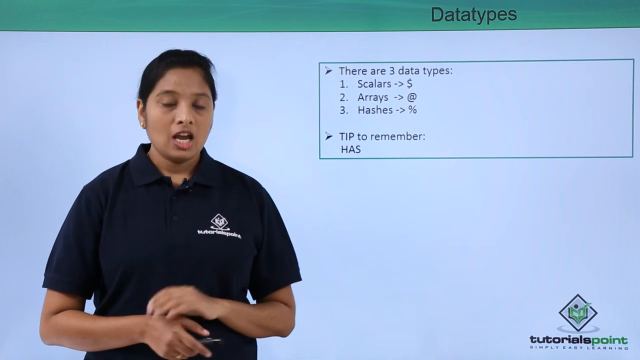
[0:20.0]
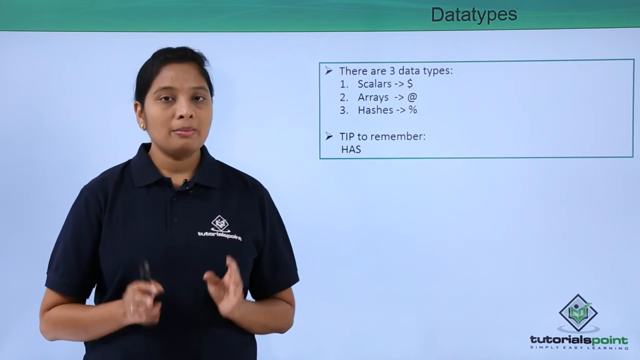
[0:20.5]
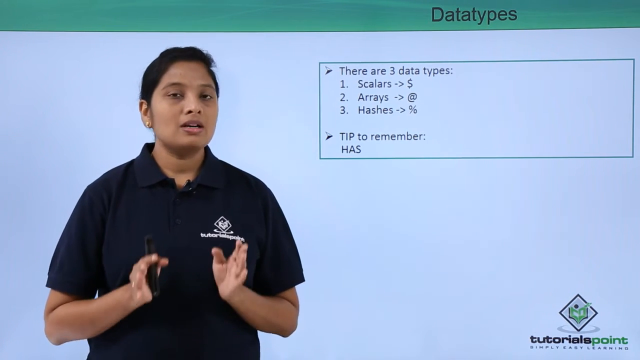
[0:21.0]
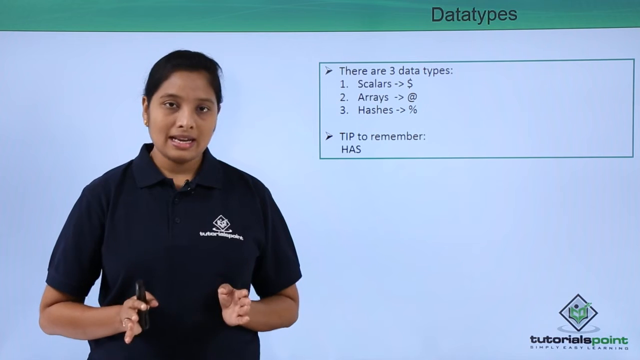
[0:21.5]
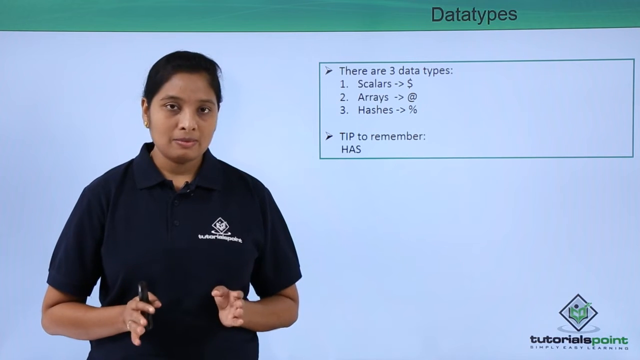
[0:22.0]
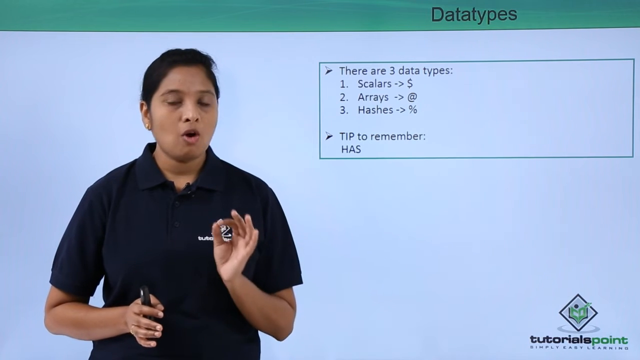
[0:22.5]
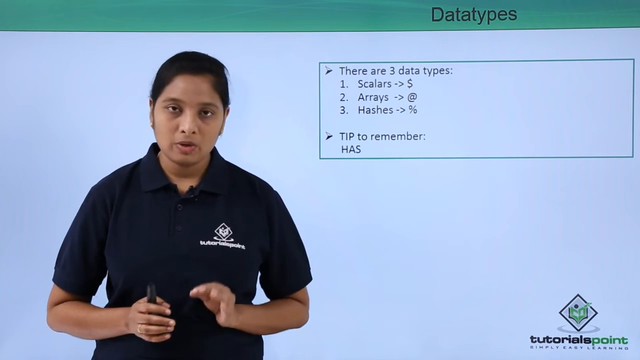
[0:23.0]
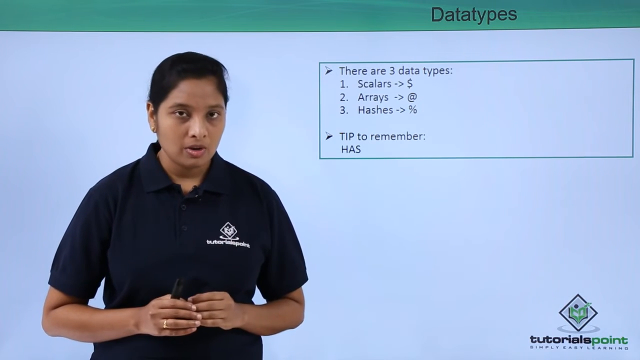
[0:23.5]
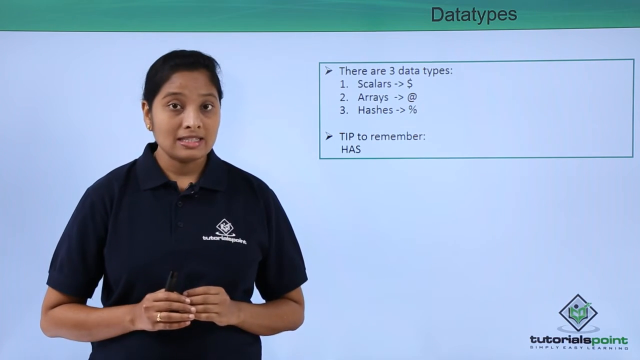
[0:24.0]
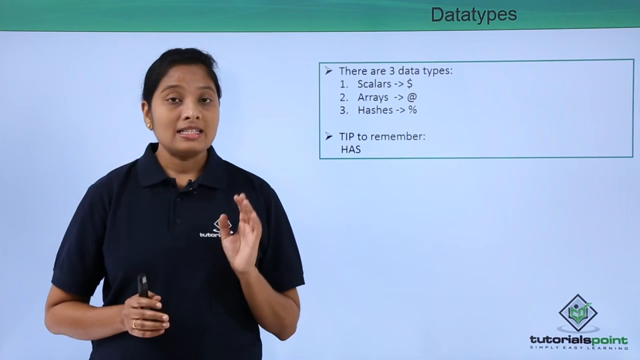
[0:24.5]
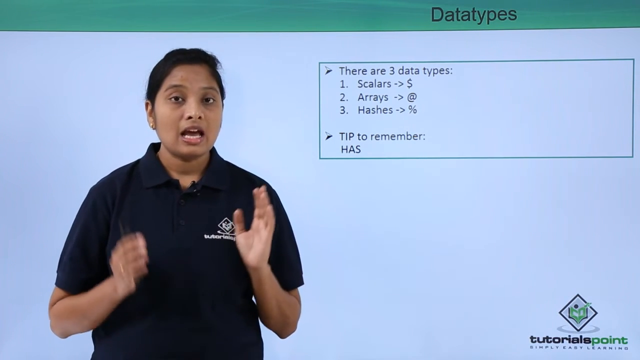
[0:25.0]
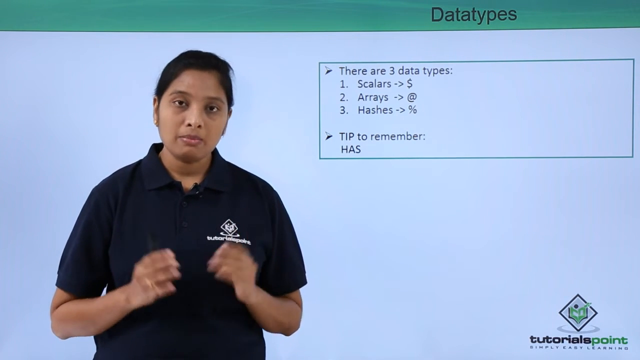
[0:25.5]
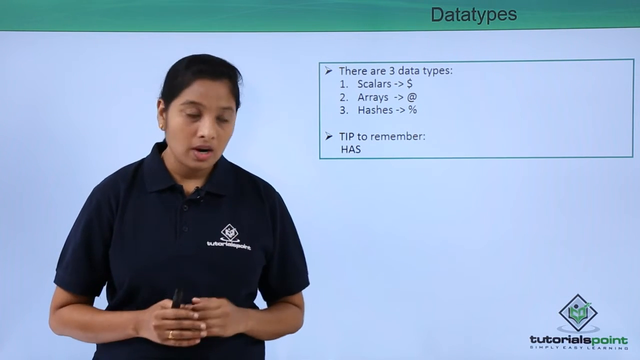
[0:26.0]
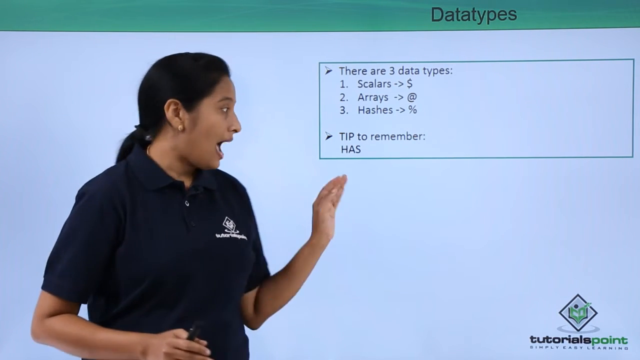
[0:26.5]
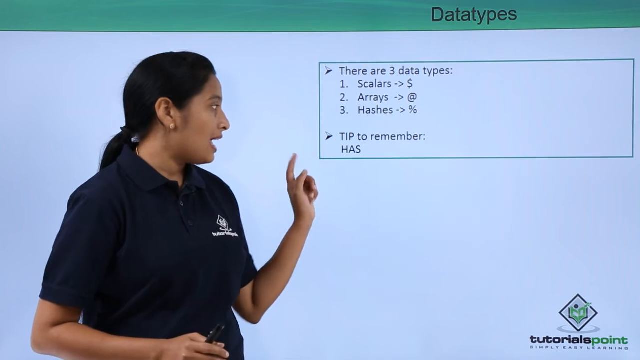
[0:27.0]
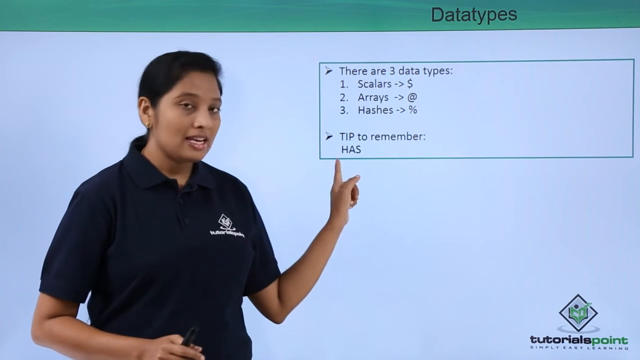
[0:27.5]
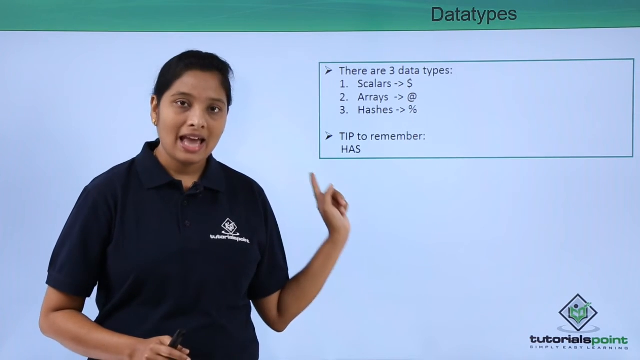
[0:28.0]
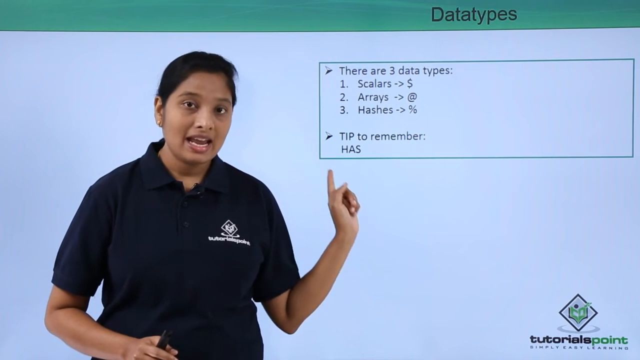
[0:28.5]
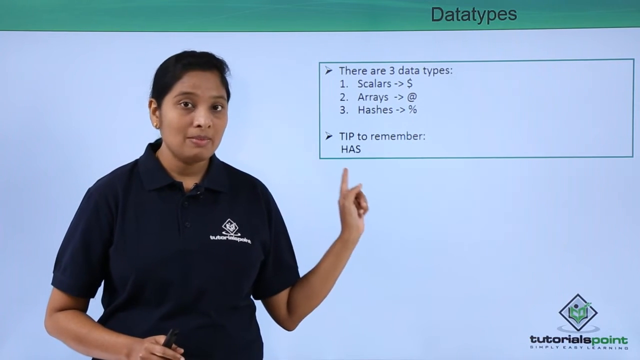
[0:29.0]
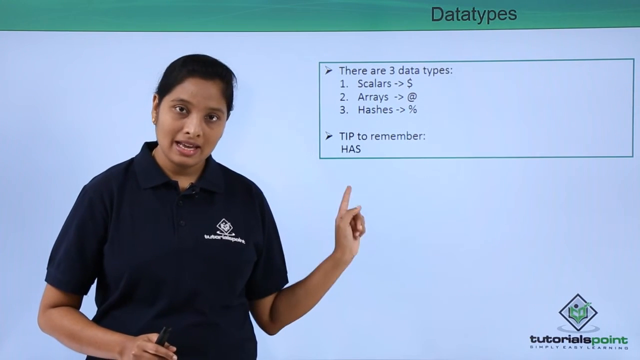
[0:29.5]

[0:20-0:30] The woman points to the tip, which says to remember it all as "has." The first data type is scalars, identified by the dollar sign; the second is arrays, the x sign; and the third is hashes, the percentage sign. At the bottom is the Tutorials Point logo, which shows a book, along with the company's slogan. The slide reads data types and does not change. The woman looks like an Indian lady. She holds a remote. She is married. She has brown skin, nice eyebrows, slicked-back hair, and an earring, and she wears a black Topgolf T-shirt. She opens her mouth and talks. The screen is bluish with a green line on top.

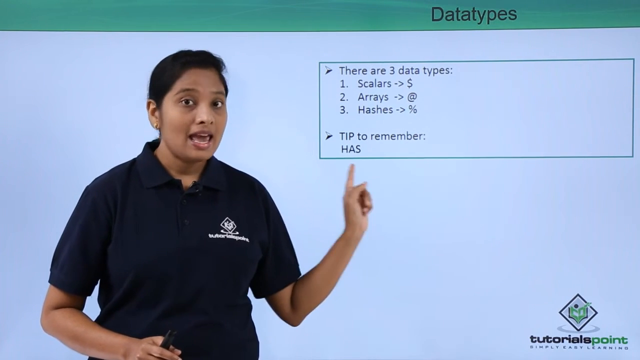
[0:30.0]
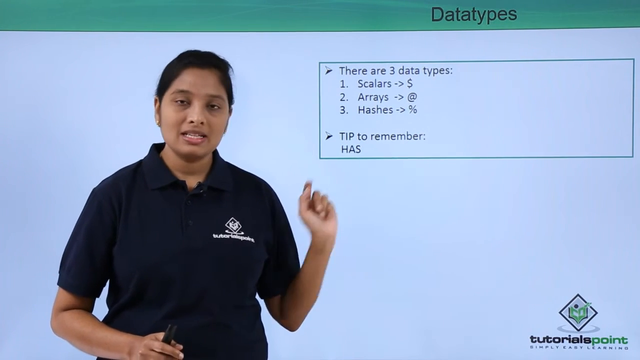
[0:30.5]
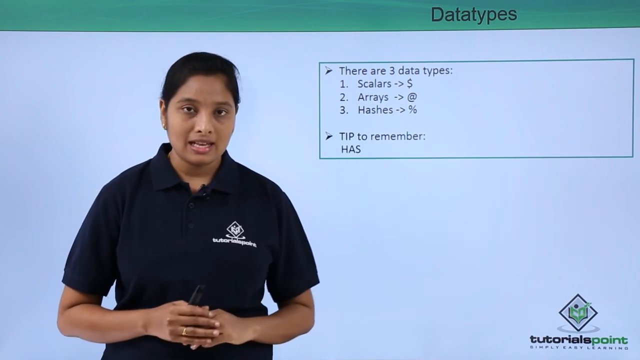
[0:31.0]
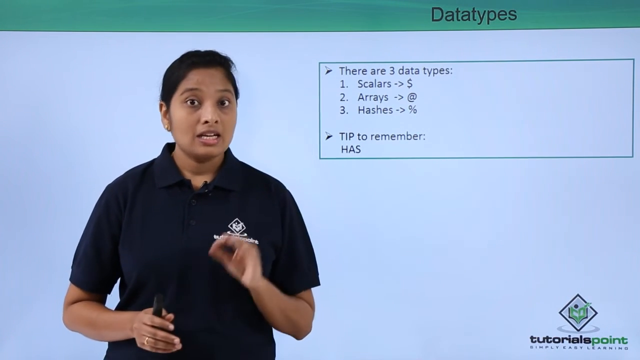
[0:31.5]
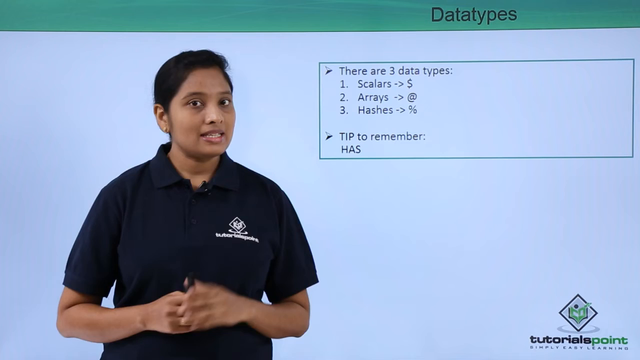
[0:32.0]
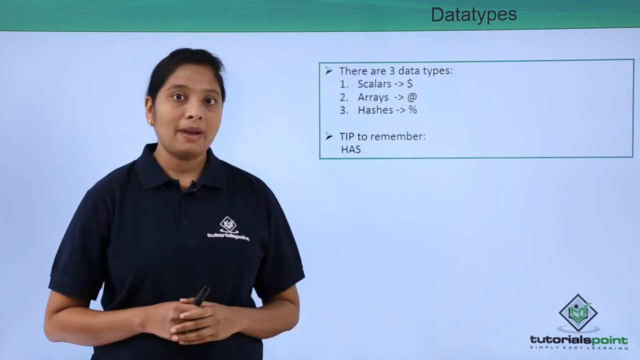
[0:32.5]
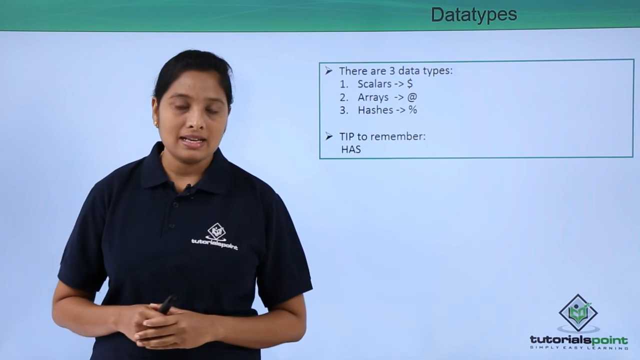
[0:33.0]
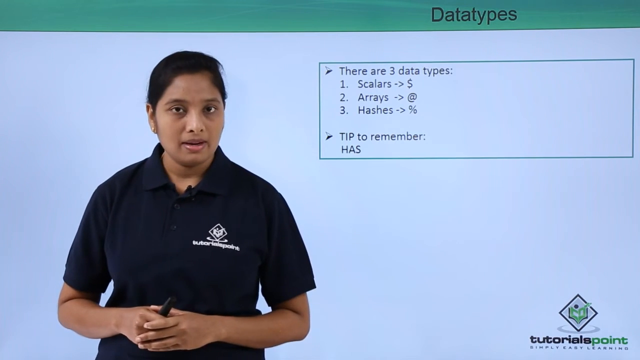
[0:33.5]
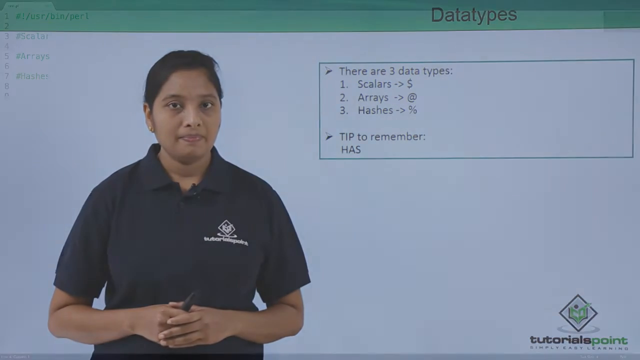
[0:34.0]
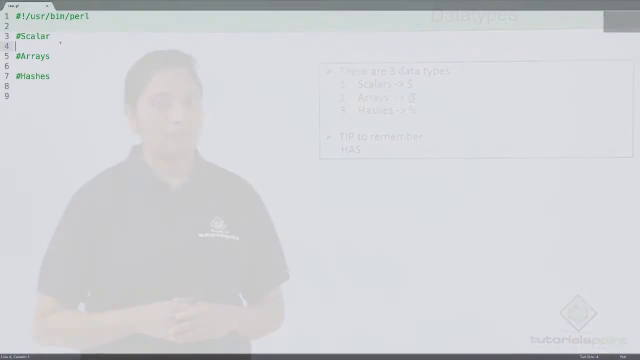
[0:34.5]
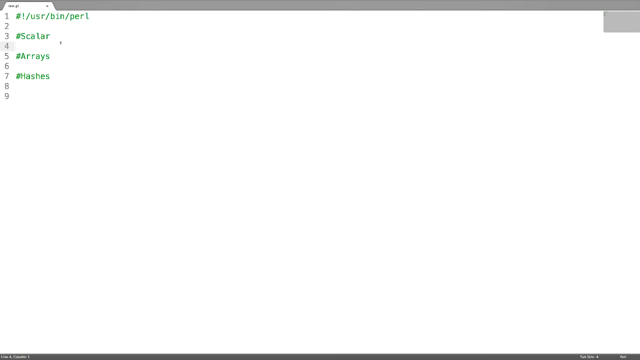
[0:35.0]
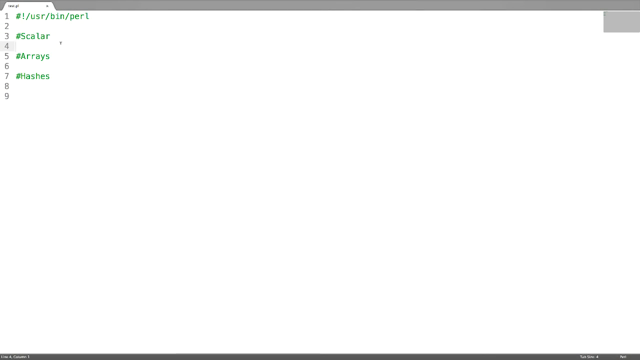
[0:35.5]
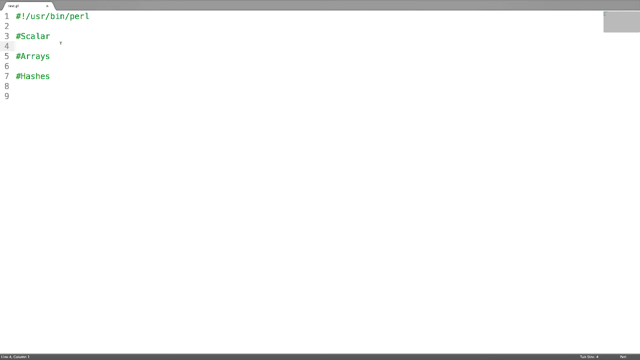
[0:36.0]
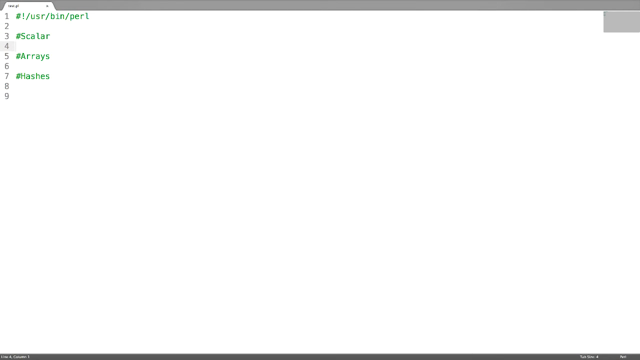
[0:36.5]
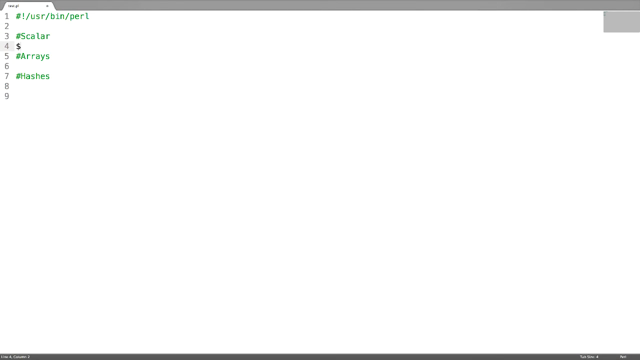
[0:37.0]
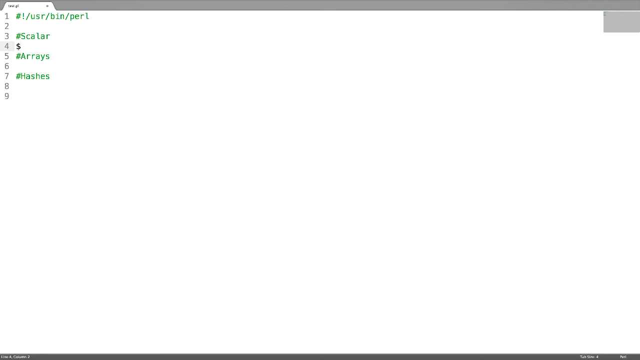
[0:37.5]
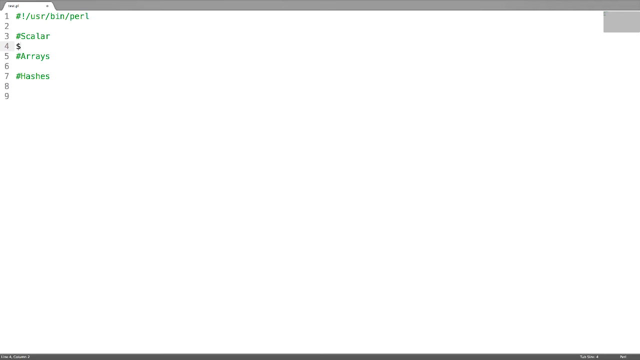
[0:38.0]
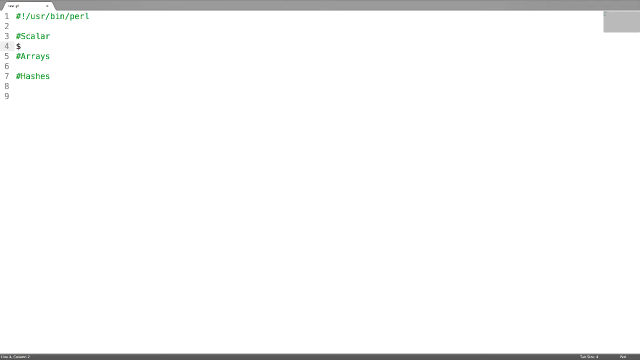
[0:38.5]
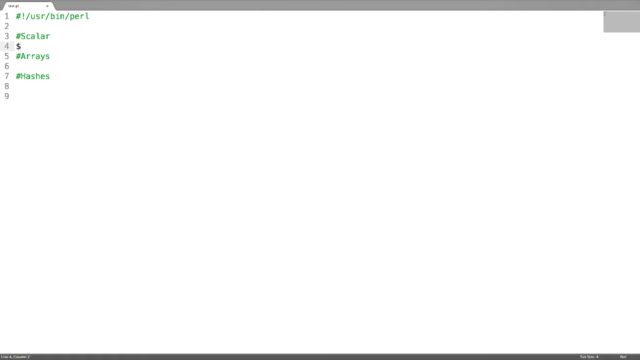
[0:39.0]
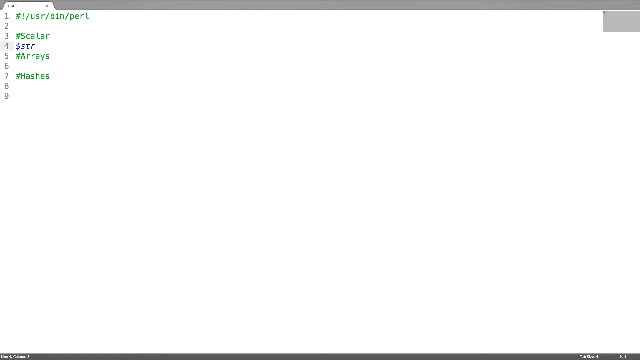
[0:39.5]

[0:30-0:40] The screen changes to a new tab with numbered lines 1 through 9. It lists the different data types: S for scalar, then # arrays, then # hashes, and a line reading user/bin/parallel. The person starts typing on line 4, entering the dollar sign. The three data types shown are scalars, arrays, and hashes: the scalar is the dollar sign, arrays are the x sign, and hashes are the percentage sign.